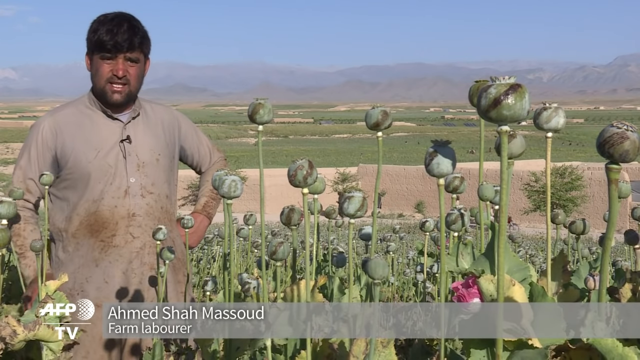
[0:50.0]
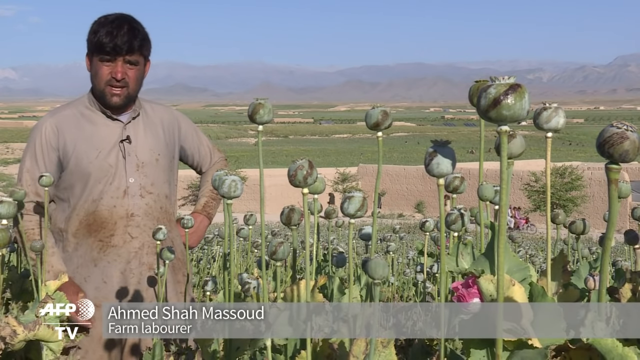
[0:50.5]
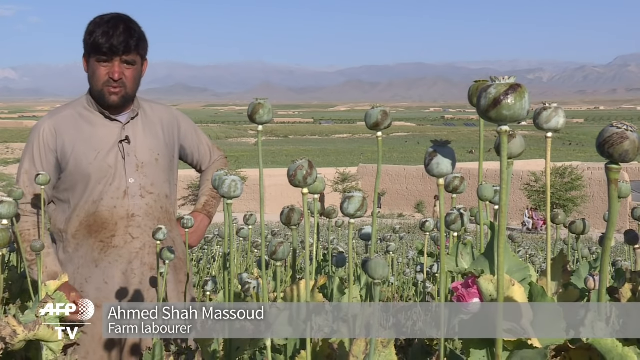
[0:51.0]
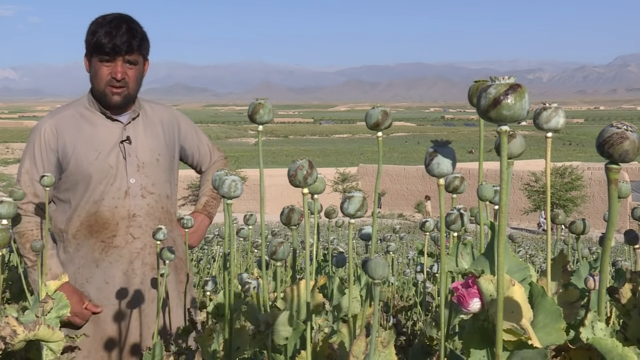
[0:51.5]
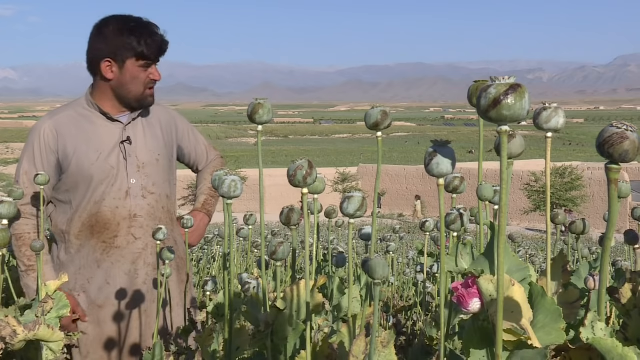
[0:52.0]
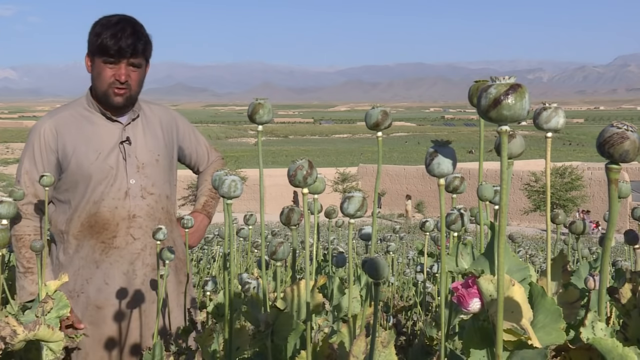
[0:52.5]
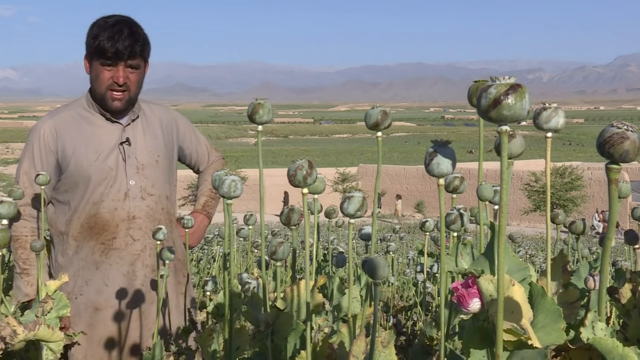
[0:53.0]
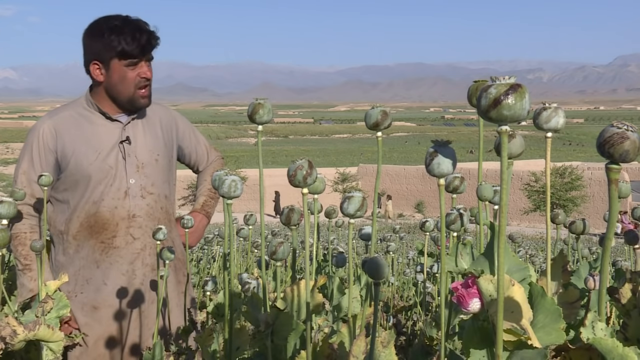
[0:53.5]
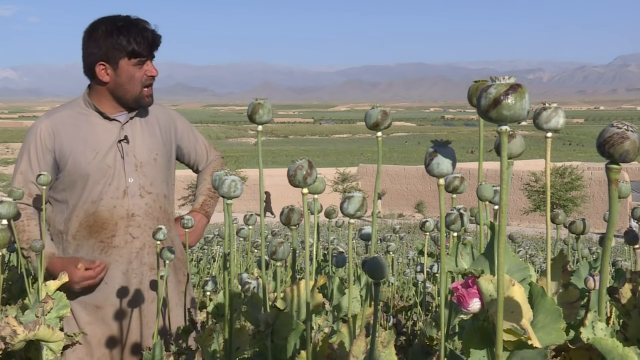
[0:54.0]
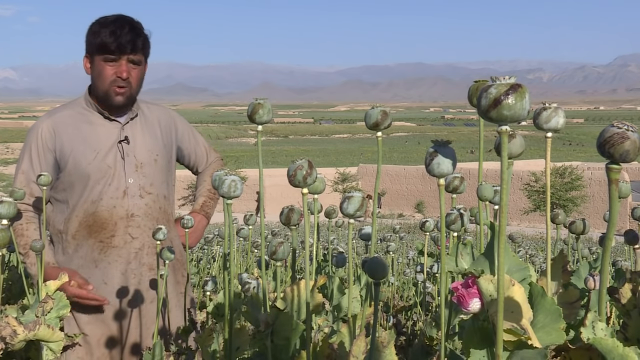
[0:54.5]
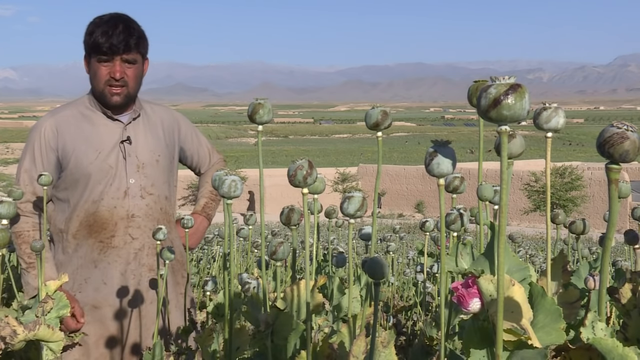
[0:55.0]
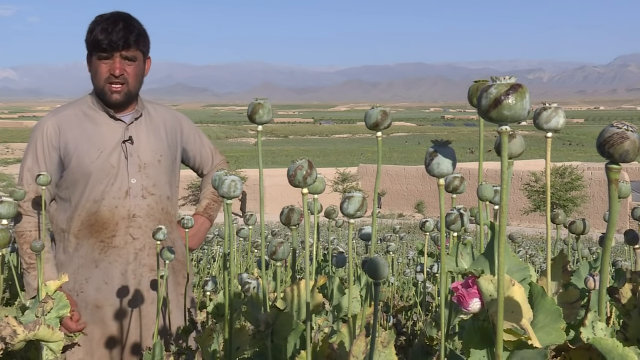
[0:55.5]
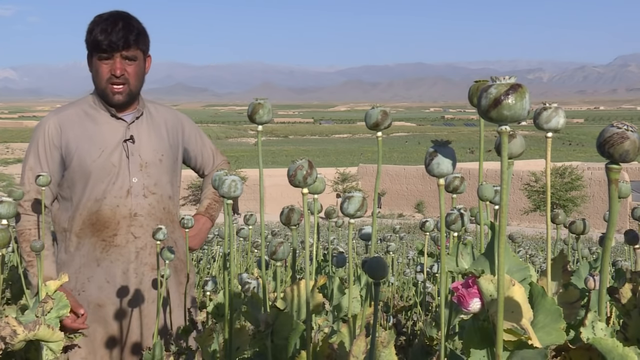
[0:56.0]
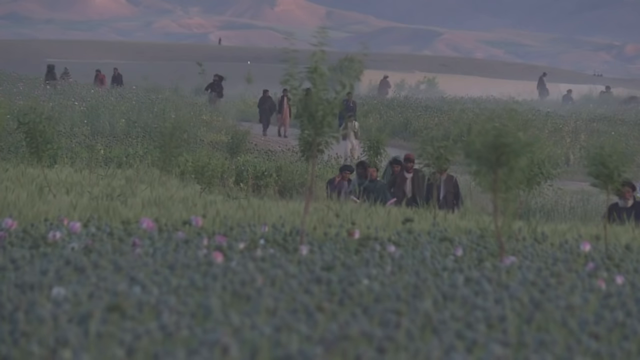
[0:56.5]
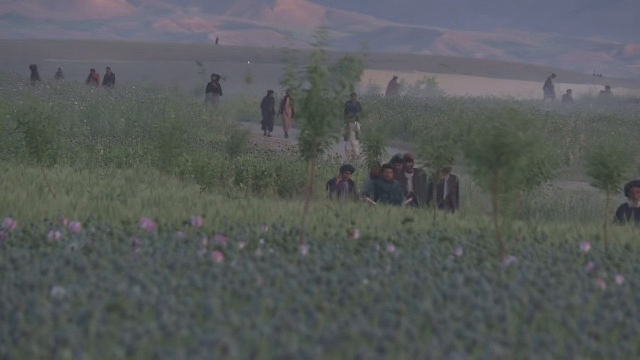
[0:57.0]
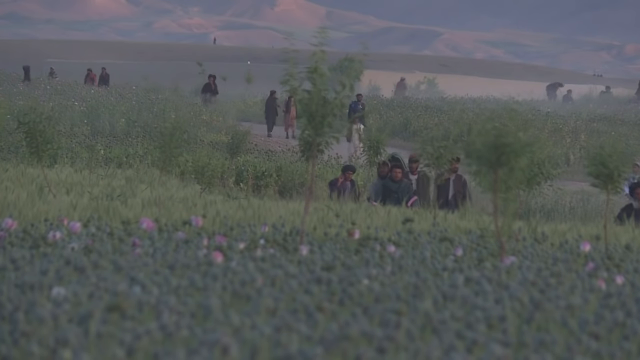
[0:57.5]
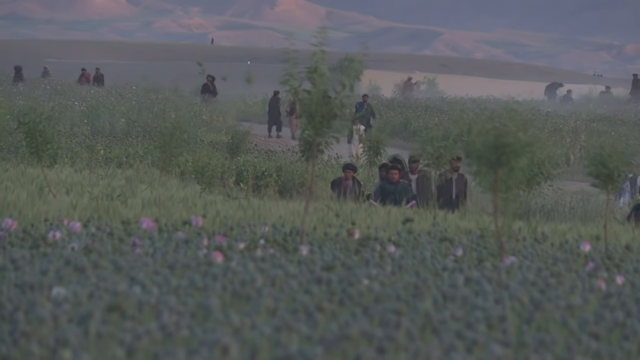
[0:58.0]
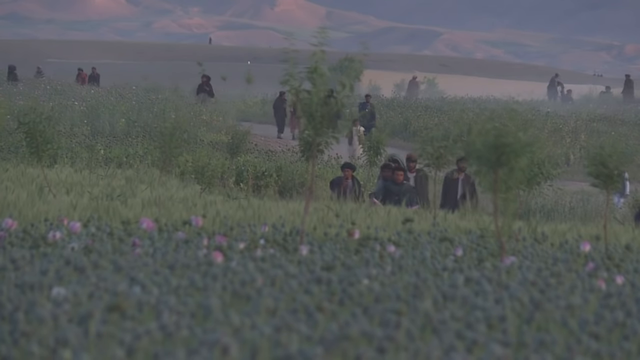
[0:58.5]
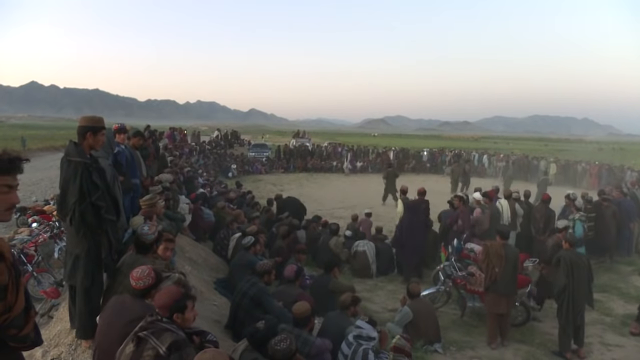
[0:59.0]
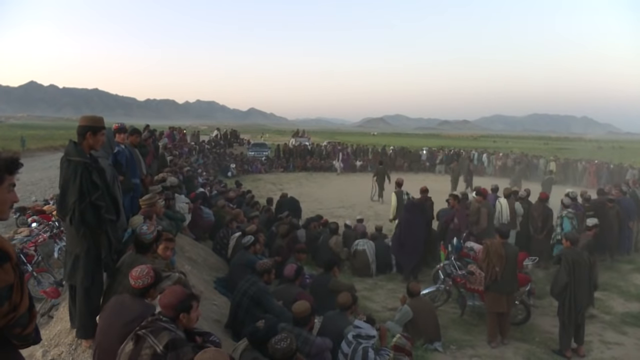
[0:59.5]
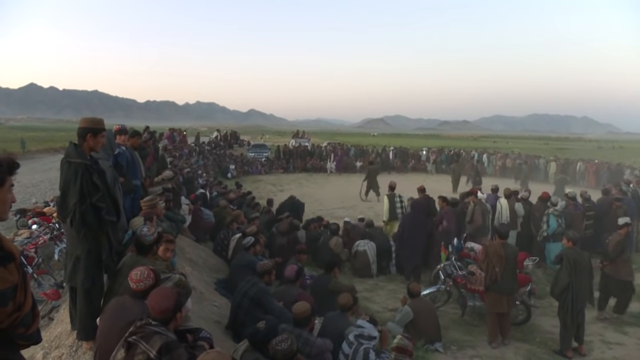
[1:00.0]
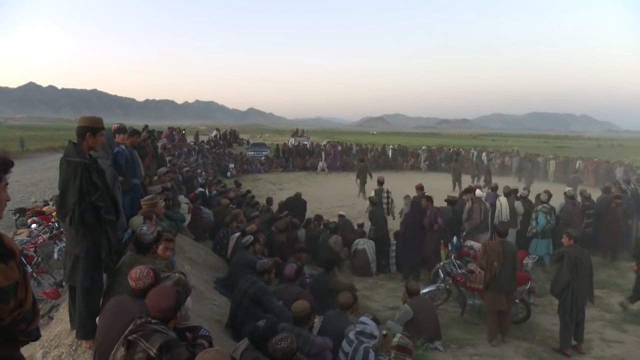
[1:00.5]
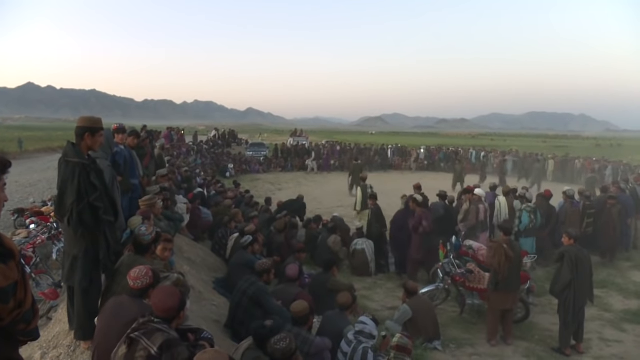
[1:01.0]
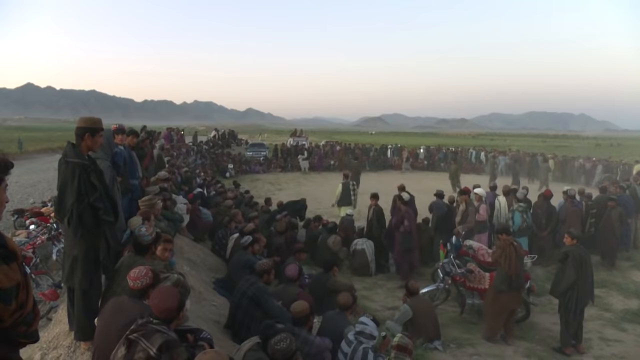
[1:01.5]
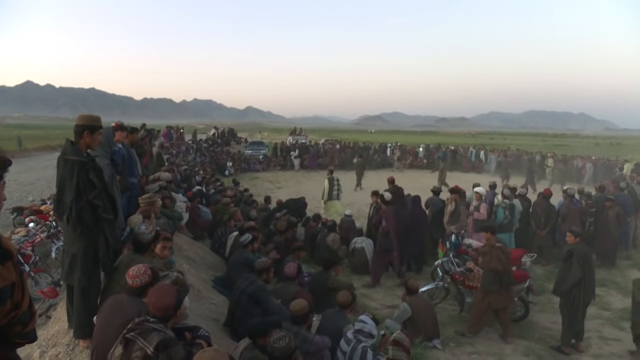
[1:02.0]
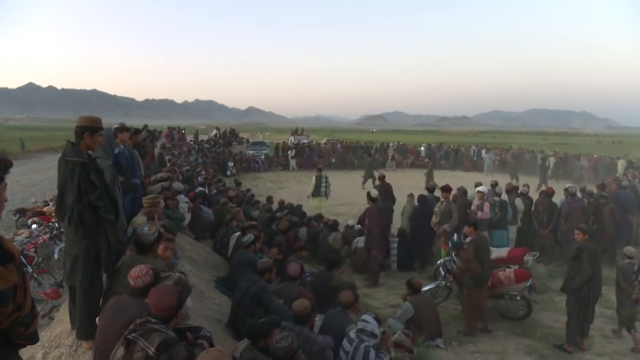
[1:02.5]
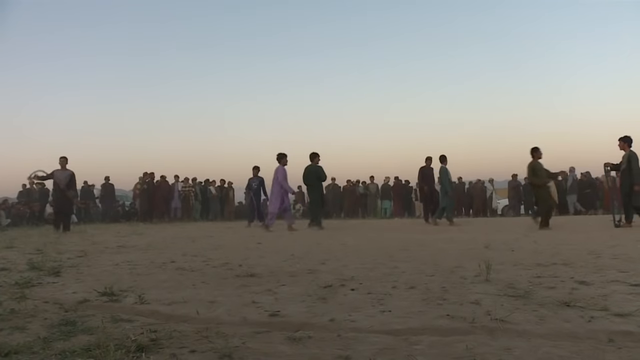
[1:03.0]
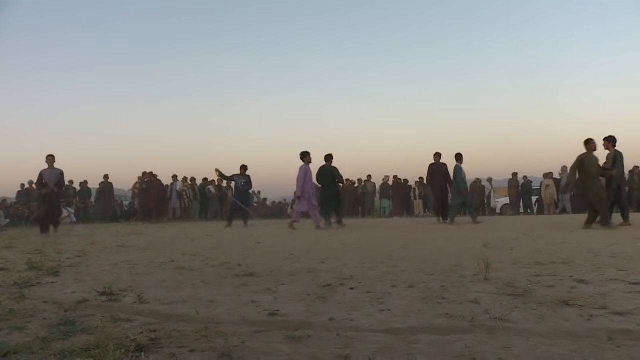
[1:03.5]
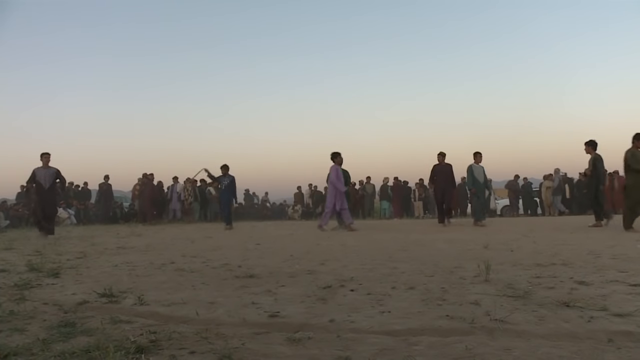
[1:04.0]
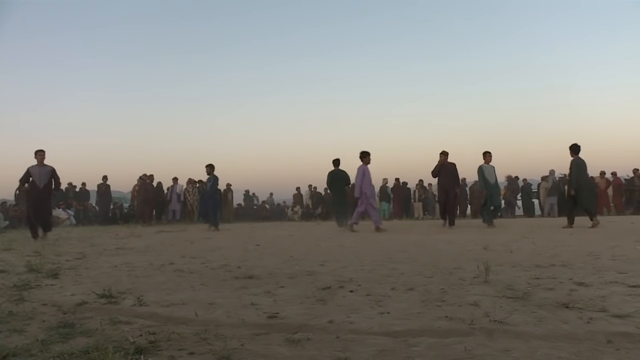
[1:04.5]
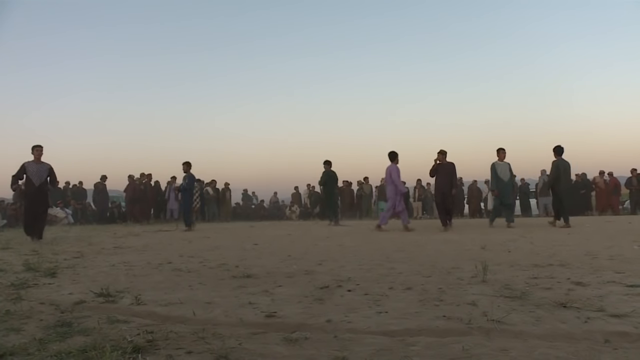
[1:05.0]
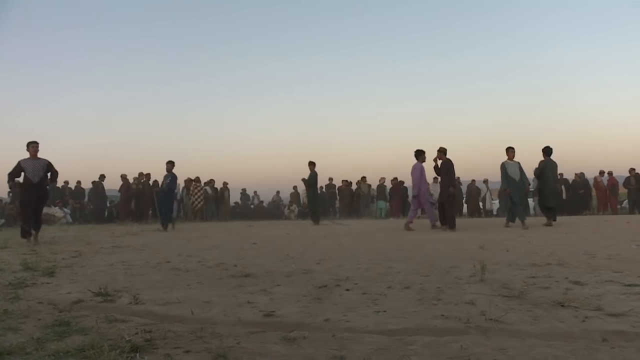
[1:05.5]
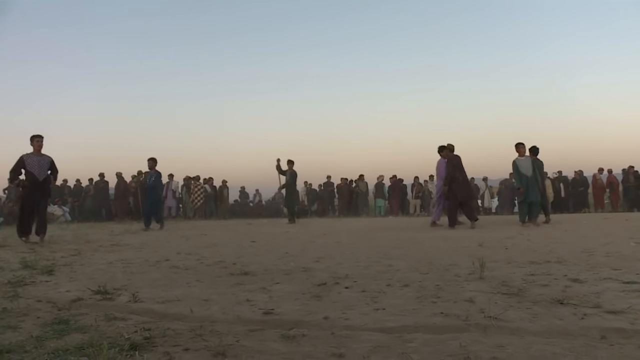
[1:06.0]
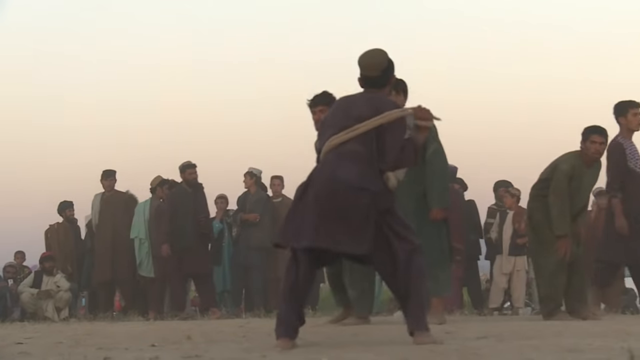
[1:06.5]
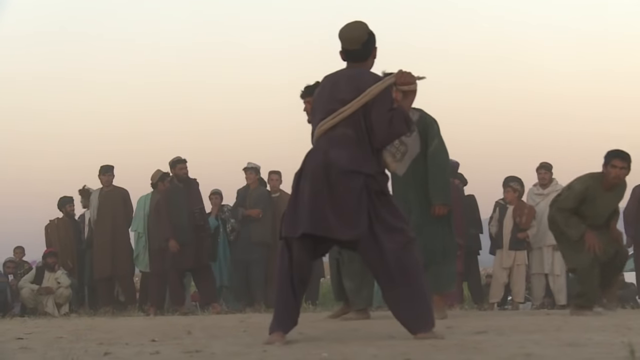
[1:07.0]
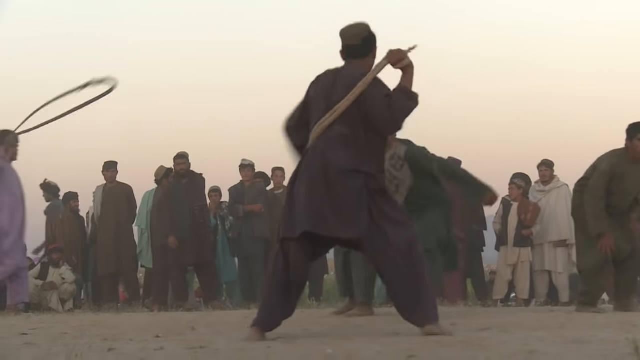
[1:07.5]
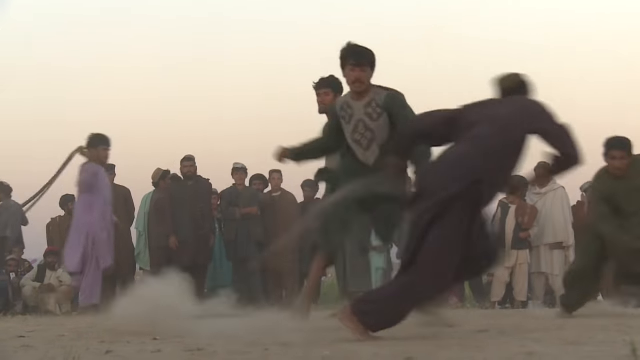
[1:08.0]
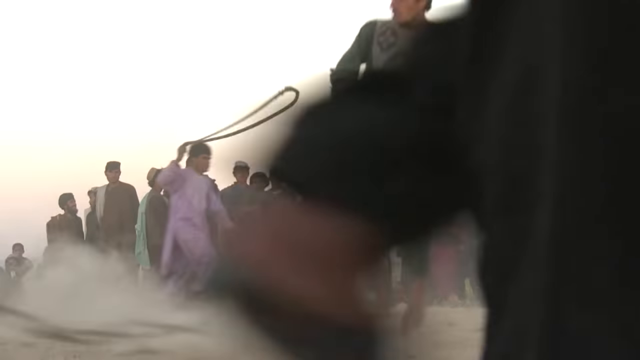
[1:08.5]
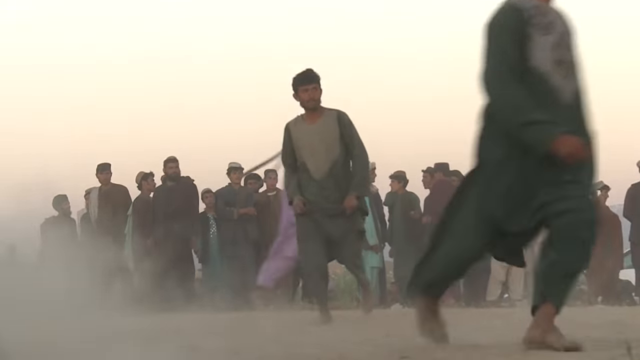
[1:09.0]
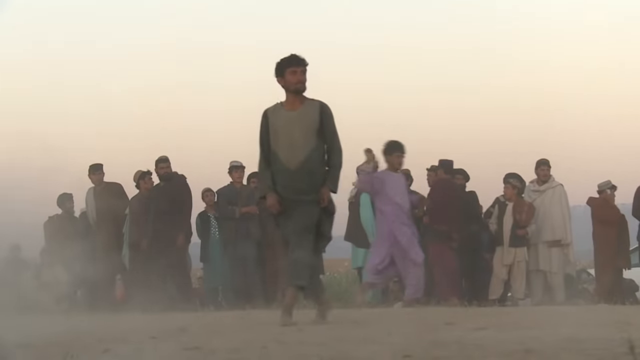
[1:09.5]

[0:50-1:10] Muhammad stands in the field among poppies about waist high, his left arm on his hip and his right arm down at his side, making small motions with his hands as he talks to the camera, with mountains, trees and sky behind him. A wide shot shows what looks like about 12 people: a couple walking to the left about midway up, a couple toward the bottom right corner, and in the center five men walking toward the camera behind the poppy fields. Behind them is a bit of a trail with four or five more men and a big tree beside them. Probably seven or eight more people are scattered in the far background, walking through the poppies. The background looks kind of smoggy, with the bottom of what looks like a mountain and a little sky. Then a large group is shown in a big, widely spread circle reaching almost from the top of the screen to the bottom and almost to the left and right sides, with a bit of concrete road on the left. Probably about 50 people sit around the circle, and there is a big dirt spot in its center. A close shot of the dirt area shows a couple of kids running around and people smacking each other with ropes.